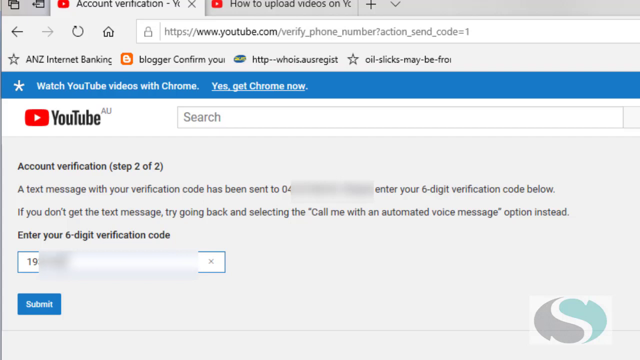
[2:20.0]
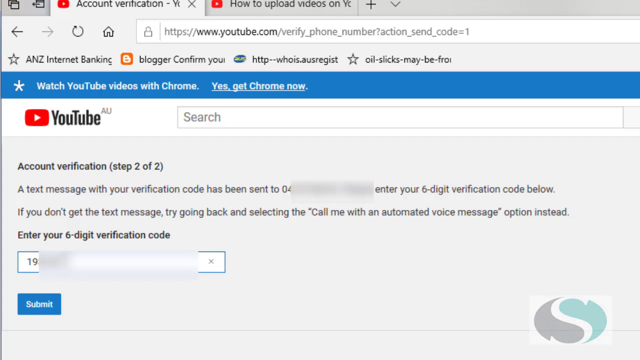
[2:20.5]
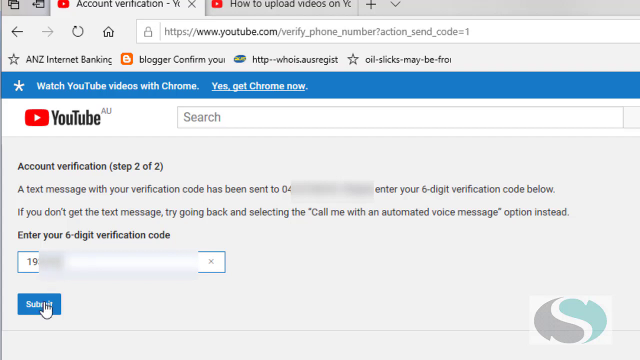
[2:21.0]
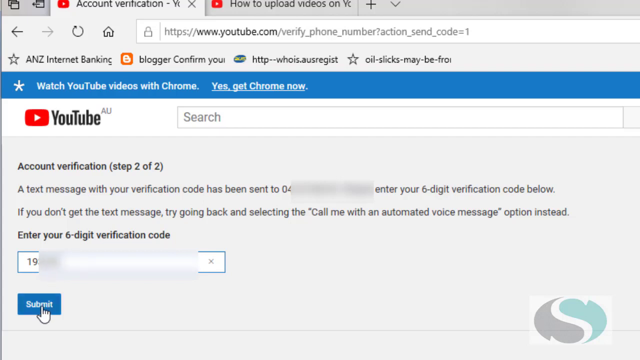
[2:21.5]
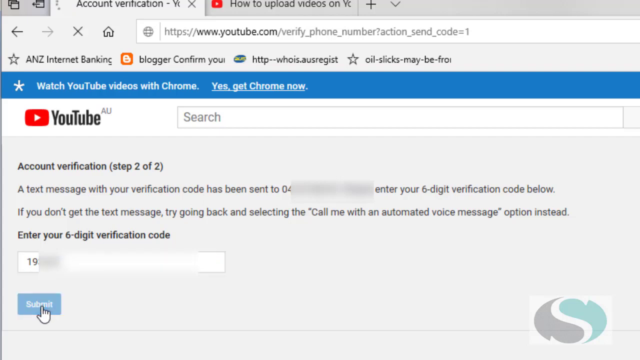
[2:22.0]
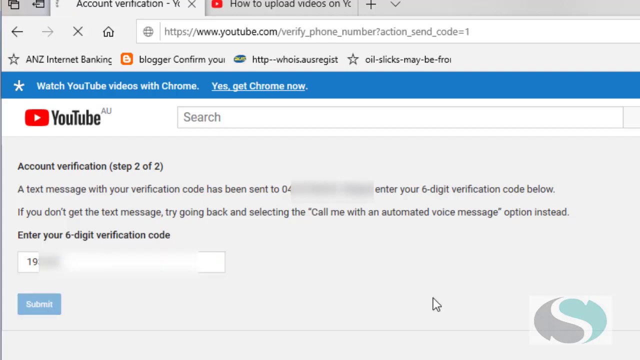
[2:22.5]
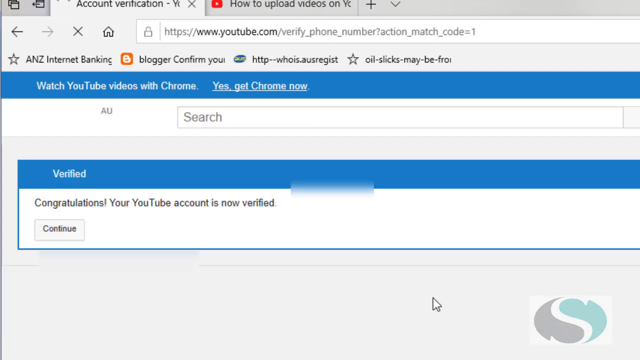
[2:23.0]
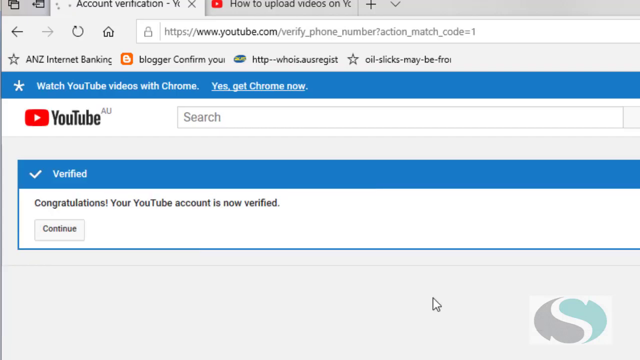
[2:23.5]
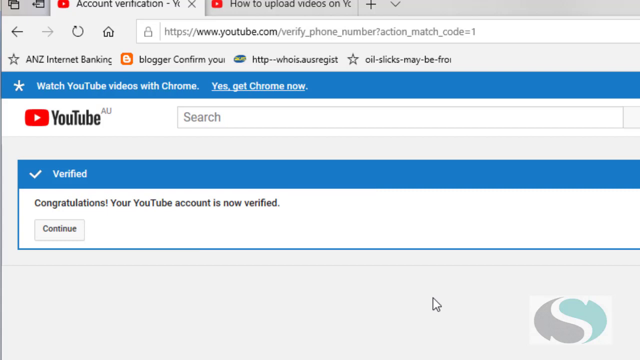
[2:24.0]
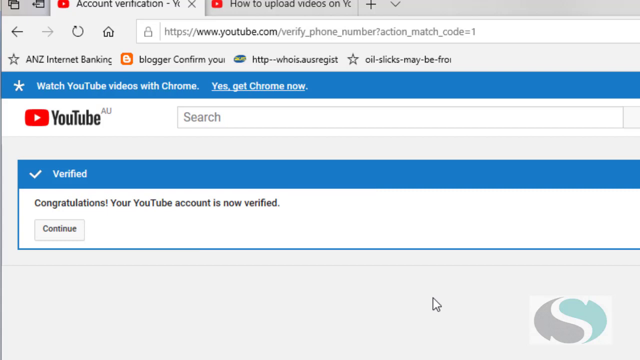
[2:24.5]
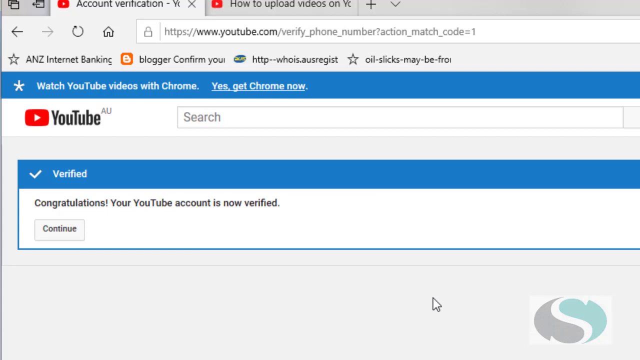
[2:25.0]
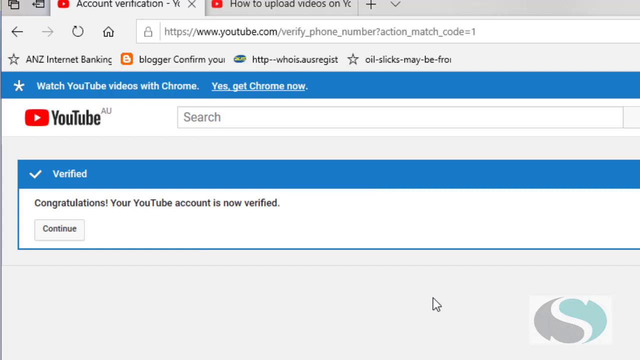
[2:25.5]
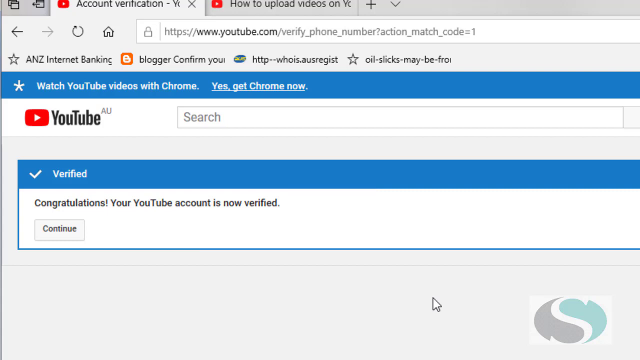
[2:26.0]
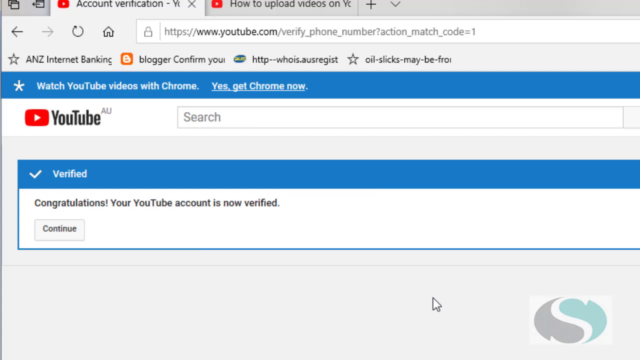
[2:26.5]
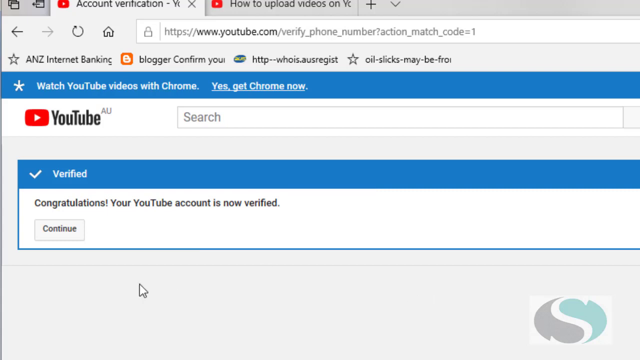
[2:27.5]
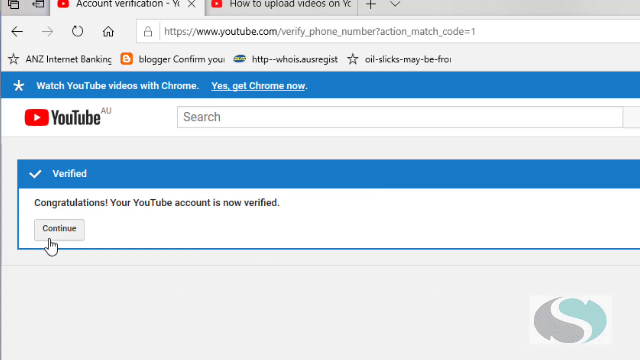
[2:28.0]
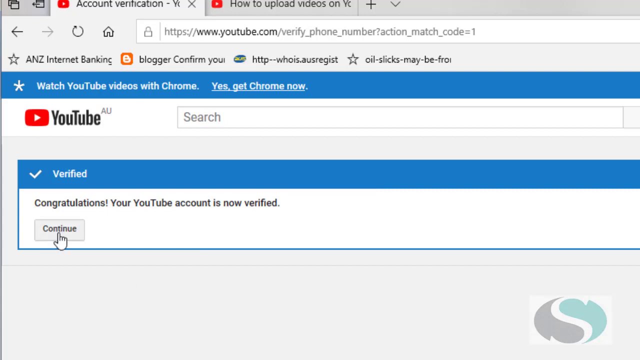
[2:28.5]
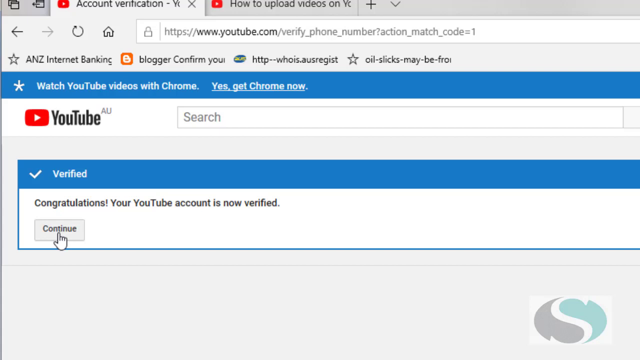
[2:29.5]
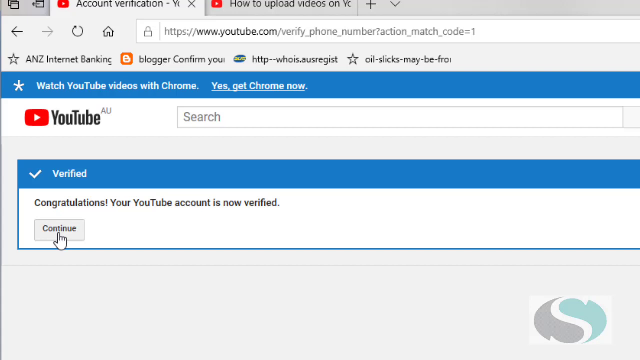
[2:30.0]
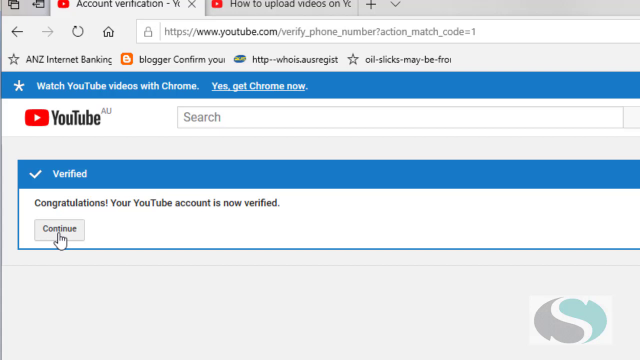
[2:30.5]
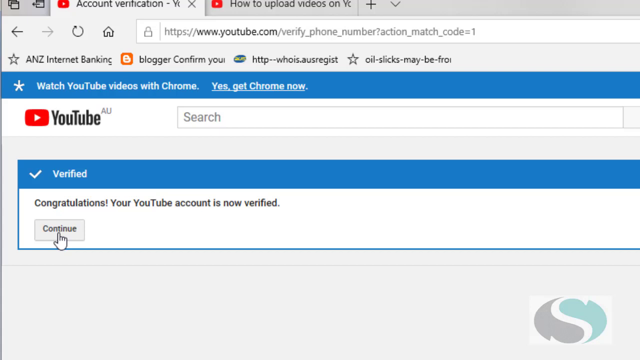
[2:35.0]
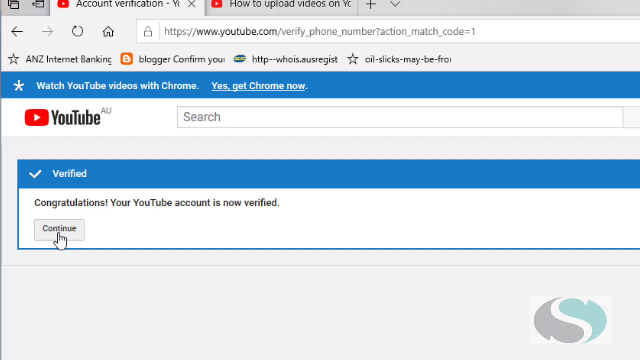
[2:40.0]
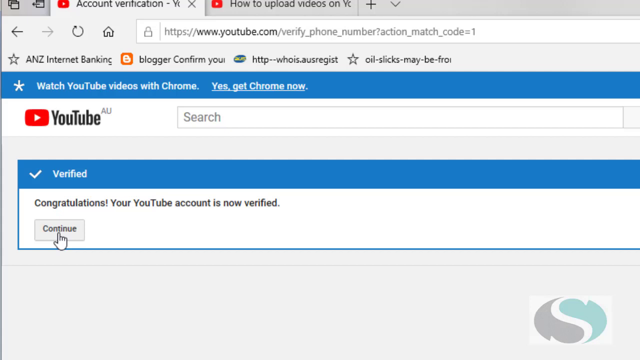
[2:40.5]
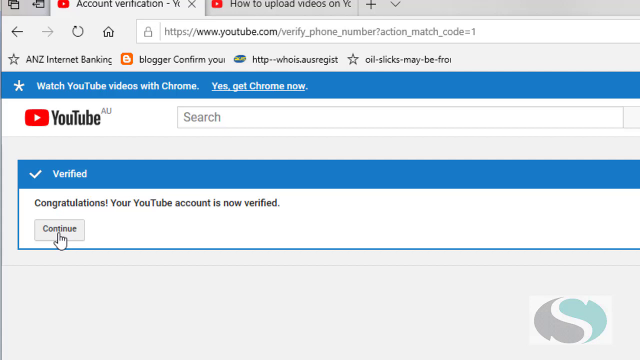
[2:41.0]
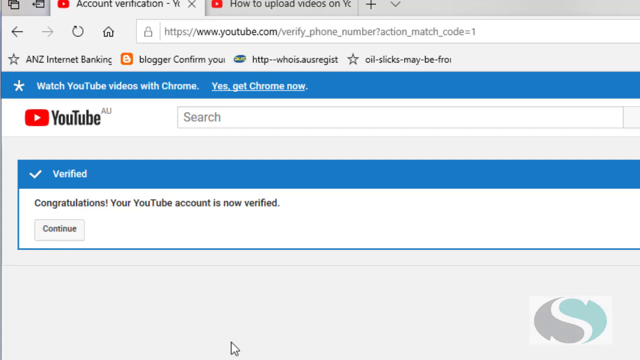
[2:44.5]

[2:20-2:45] The second part of the account verification page reads "step two of two." At the top, a blue banner with a star icon reads "watch YouTube videos with Chrome" and "yes, get Chrome now," suggesting the browser might not be Chrome. Above that is a favorites bar with "ANZ Internet Banking," a blogger, "confirmed you," another icon, and another one about oil slicks. Beneath the account verification heading, a paragraph reads "a text message with your verification code has been sent," with the phone number blocked out, and the paragraph continues further. After the code is entered, another page shows "verified" with a check next to it, followed by "congratulations. Your YouTube account is now verified" with a continue button. The user hovers over the button as if about to click it but does not progress further.